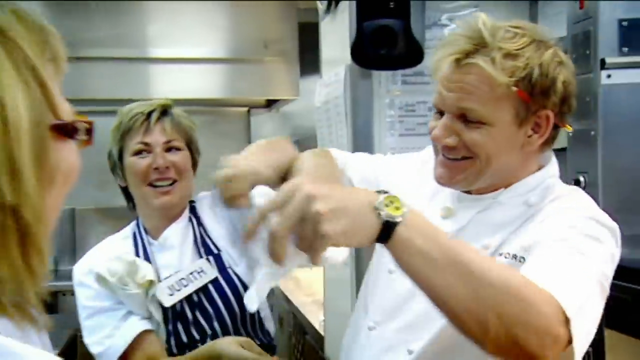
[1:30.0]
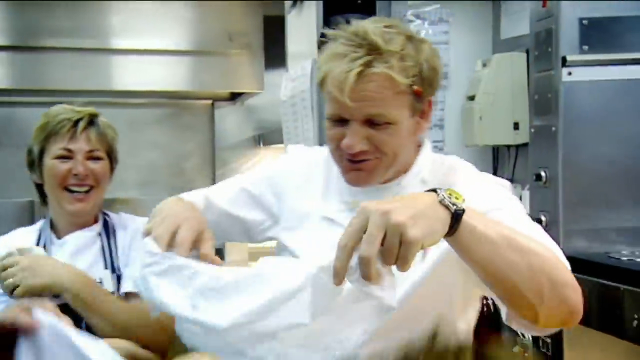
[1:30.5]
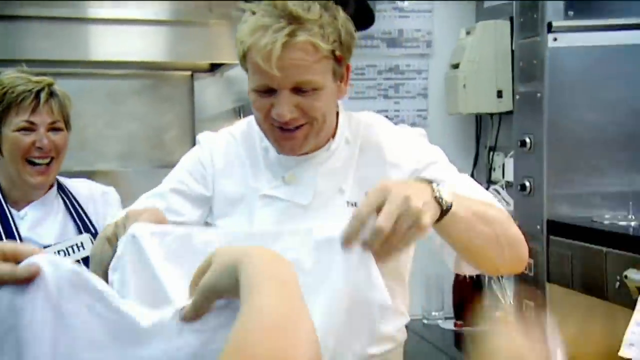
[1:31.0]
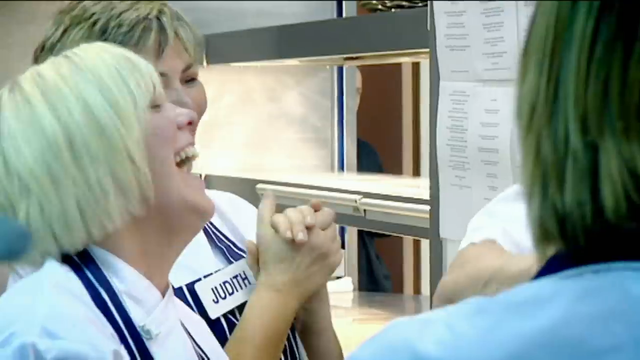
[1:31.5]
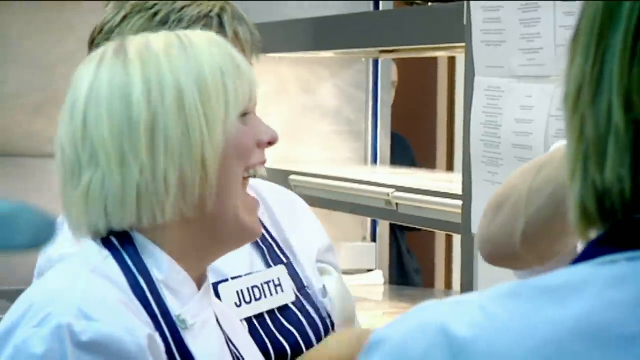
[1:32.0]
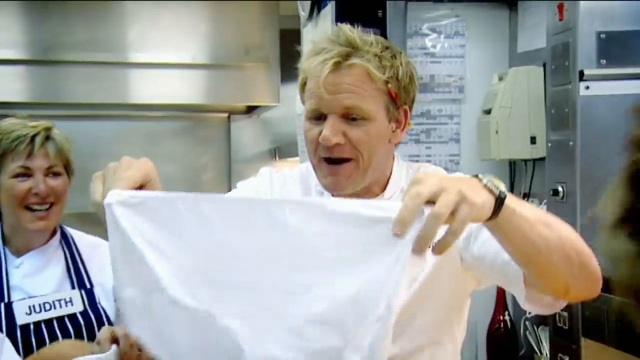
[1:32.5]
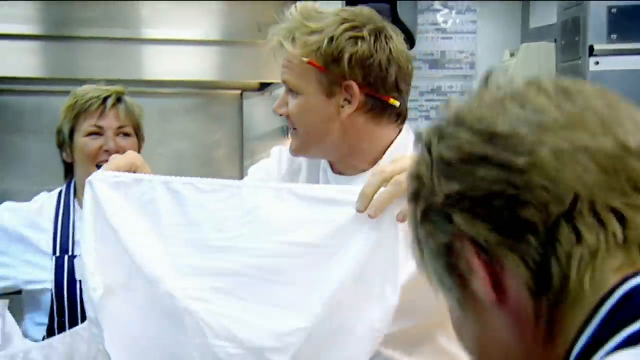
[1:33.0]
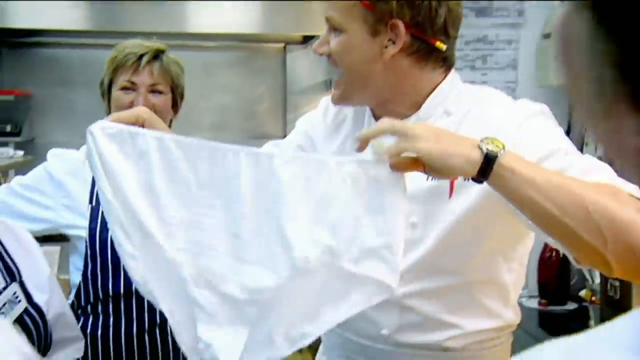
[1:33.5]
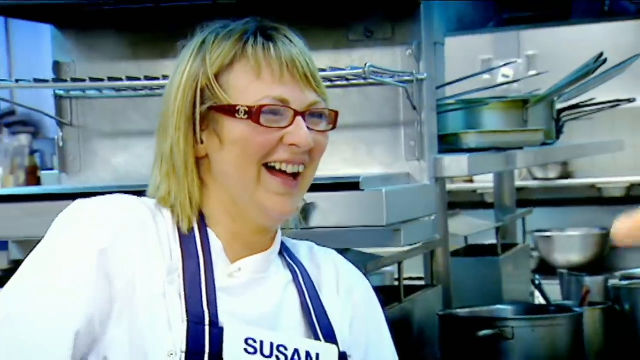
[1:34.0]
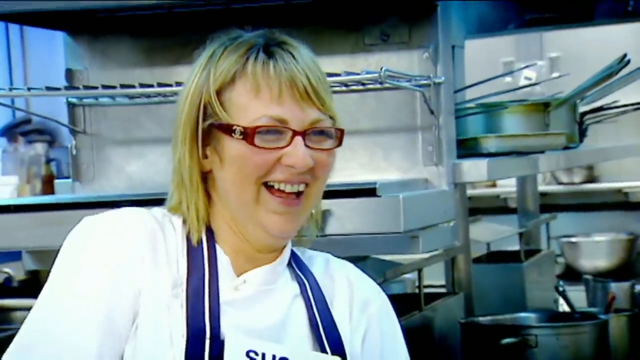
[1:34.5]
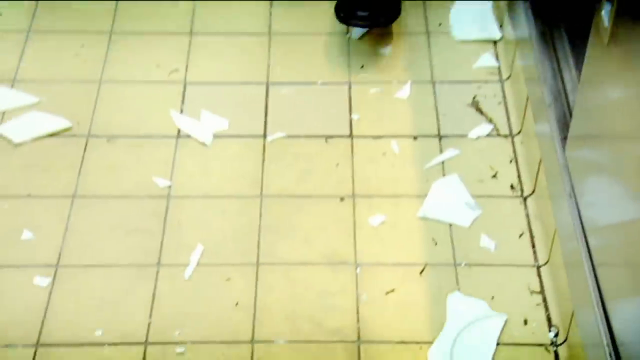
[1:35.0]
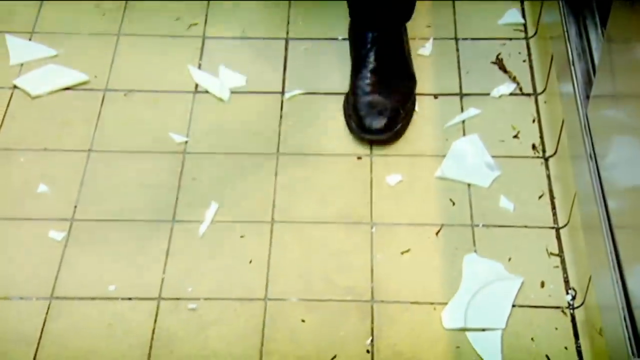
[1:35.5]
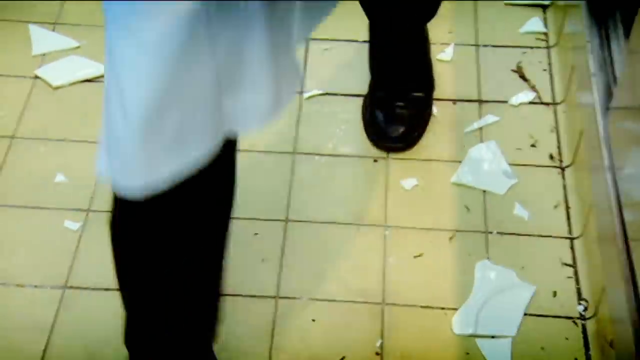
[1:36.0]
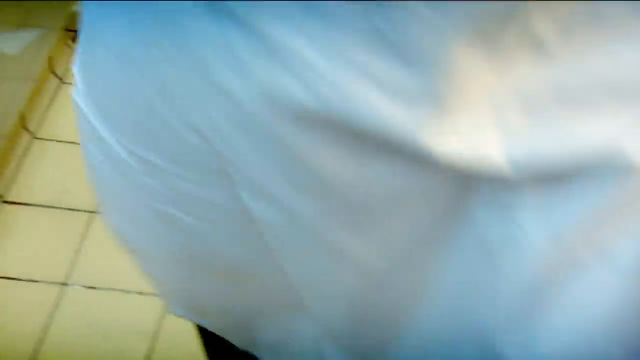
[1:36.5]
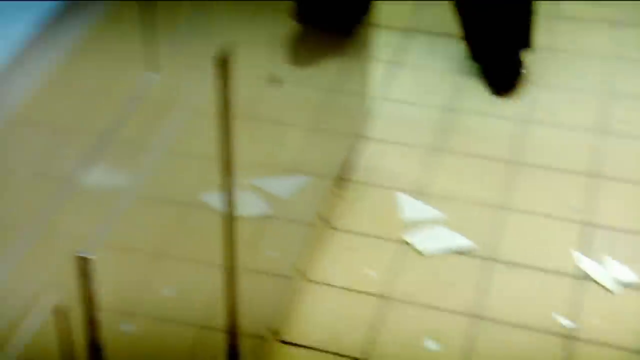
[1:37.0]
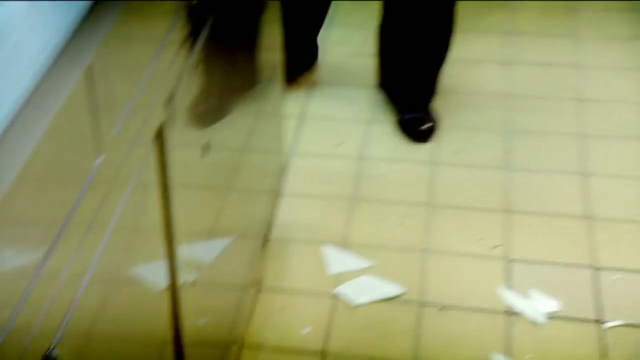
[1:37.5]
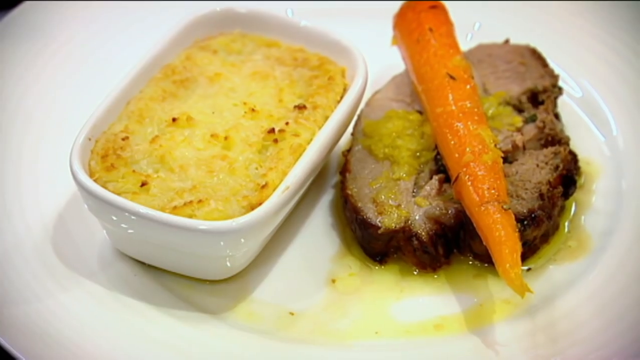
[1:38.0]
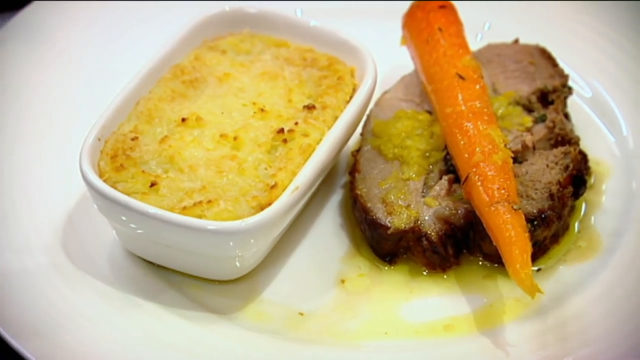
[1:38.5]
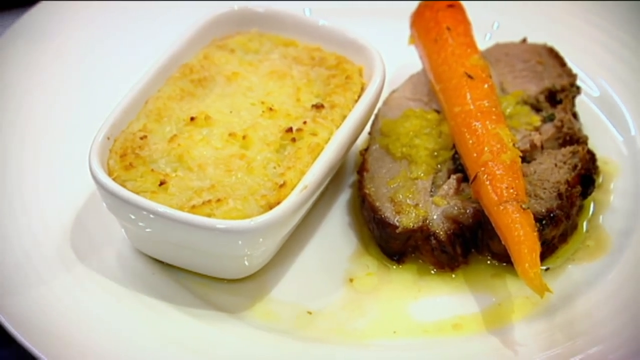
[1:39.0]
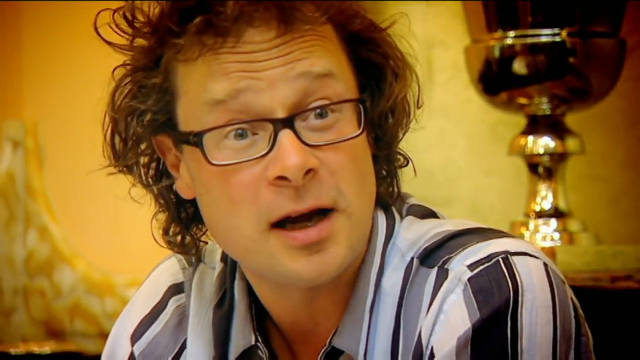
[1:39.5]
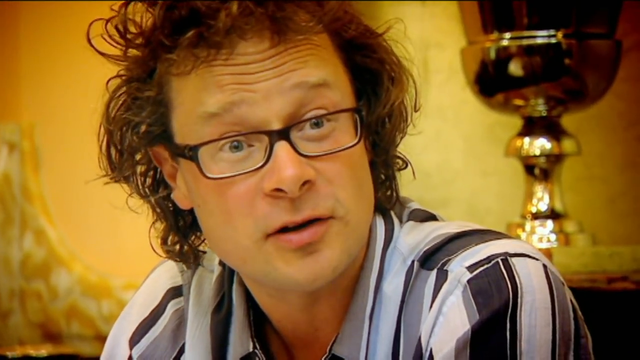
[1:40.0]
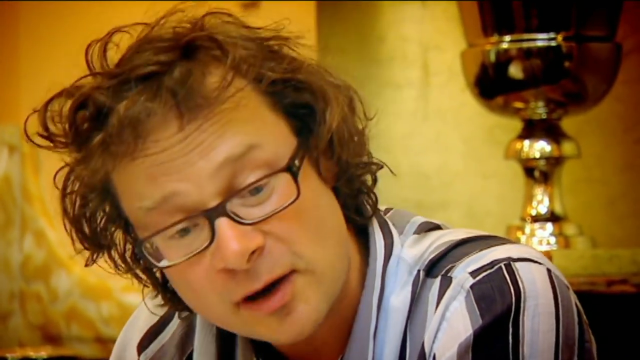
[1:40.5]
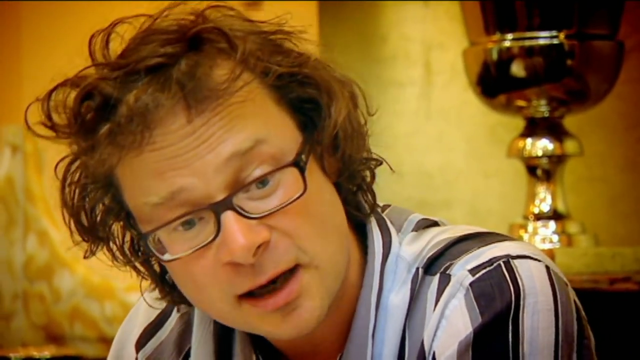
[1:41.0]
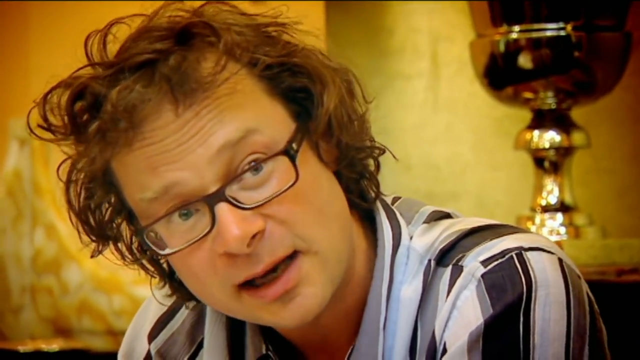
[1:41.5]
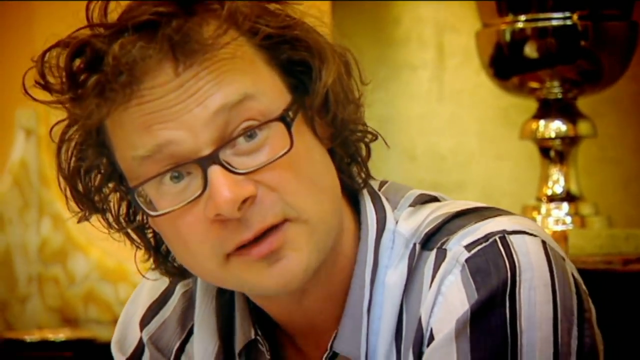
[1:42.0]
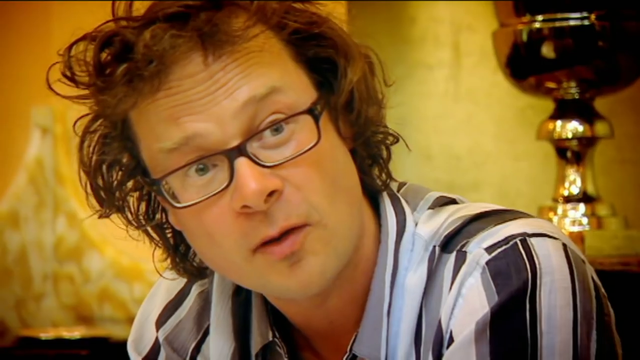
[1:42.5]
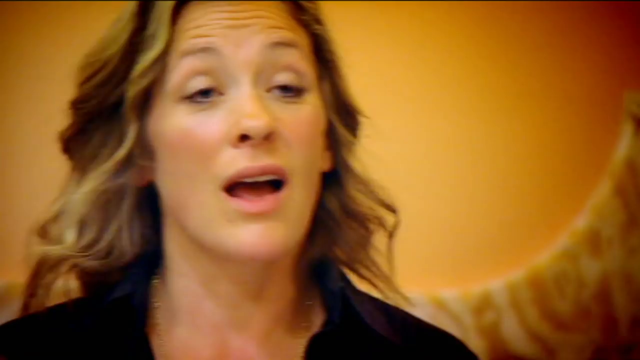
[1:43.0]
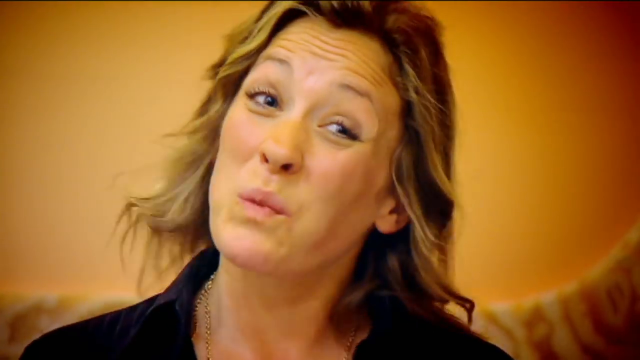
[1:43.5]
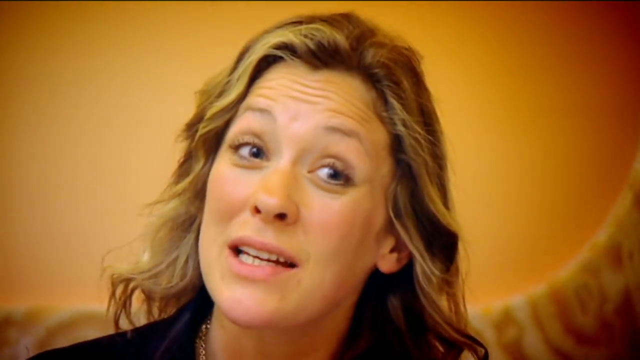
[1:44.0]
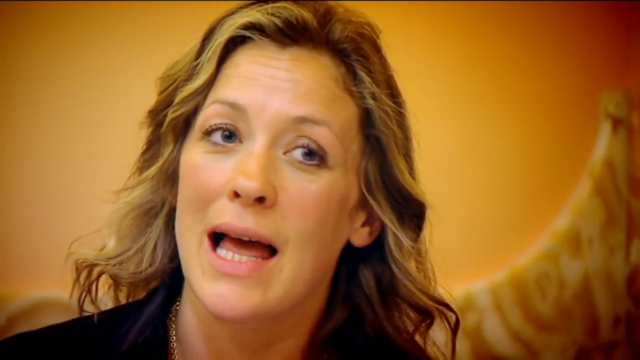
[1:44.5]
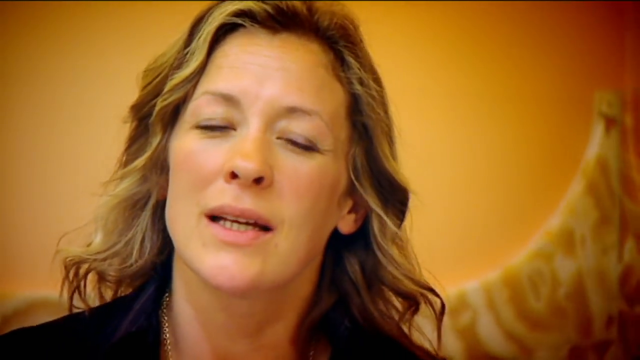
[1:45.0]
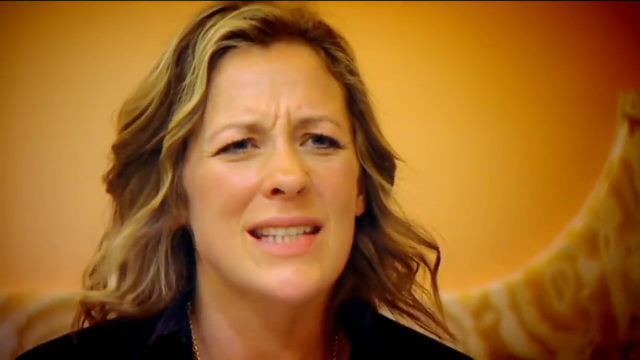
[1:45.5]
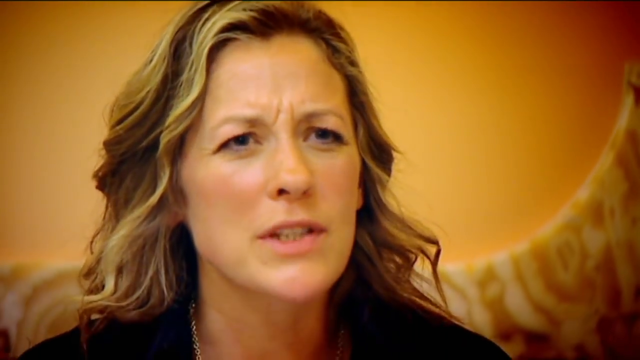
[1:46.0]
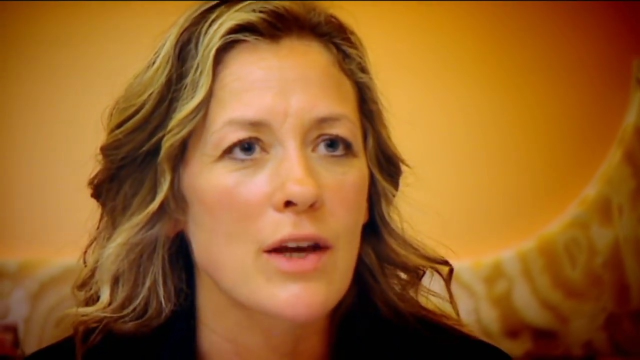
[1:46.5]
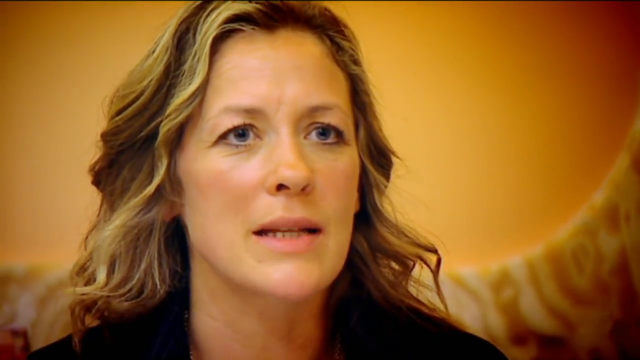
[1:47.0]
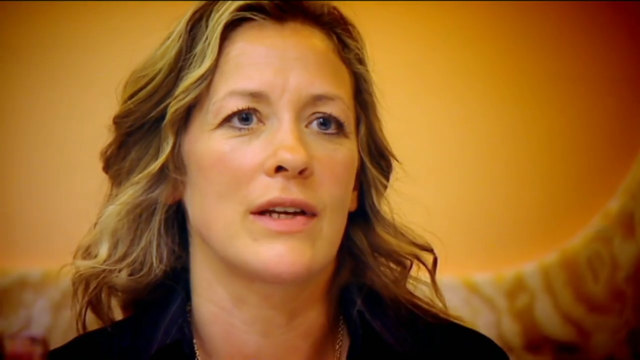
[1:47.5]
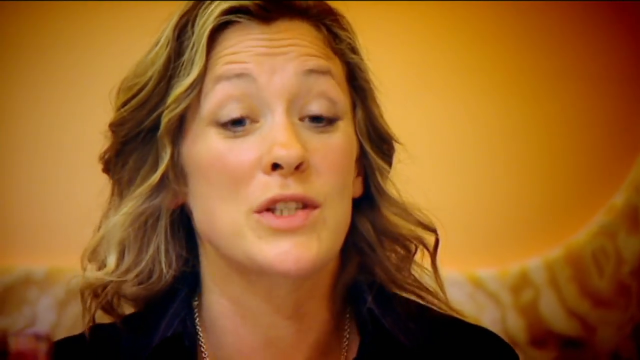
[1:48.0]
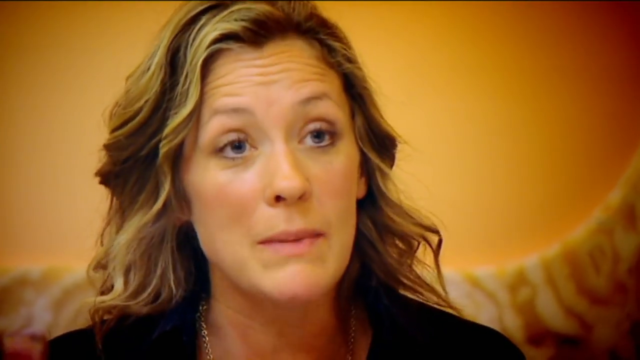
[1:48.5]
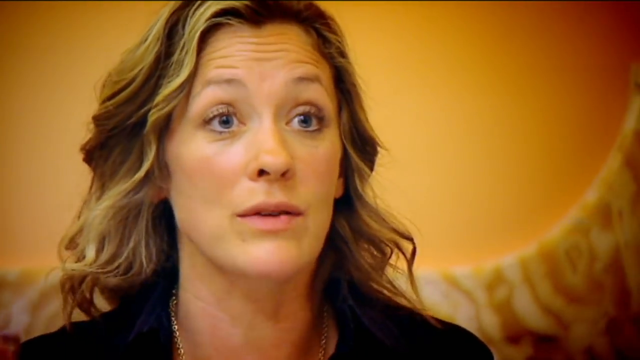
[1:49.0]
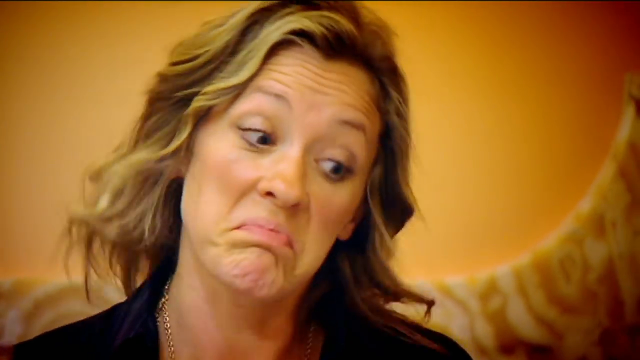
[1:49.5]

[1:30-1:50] Chefs in the kitchen are playing around, looking cheerful, laughing and talking, and raising napkins in the air as they joke with the head chef, who is dressed in white. They are all dressed in white with blue striped aprons. The head chef lifts up a napkin and the ladies laugh, as if he is saying something very funny. The served food is shown: a piece of meat with a carrot on top and a pie. A man talks and explains something, appearing to be interviewed. Another woman also talks while facing the camera as if interviewed, and seems to be giving good reviews of the food served by the chefs in the restaurant.